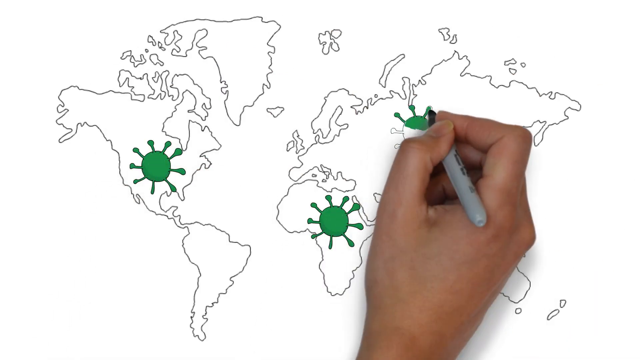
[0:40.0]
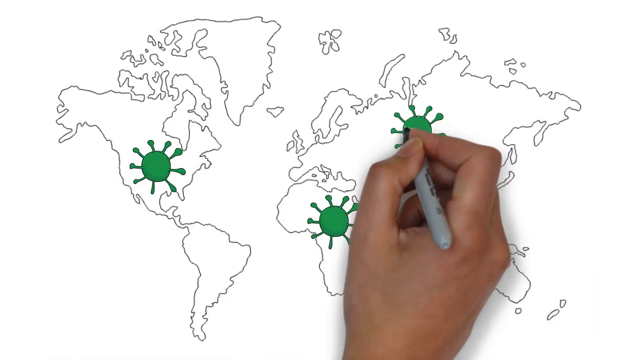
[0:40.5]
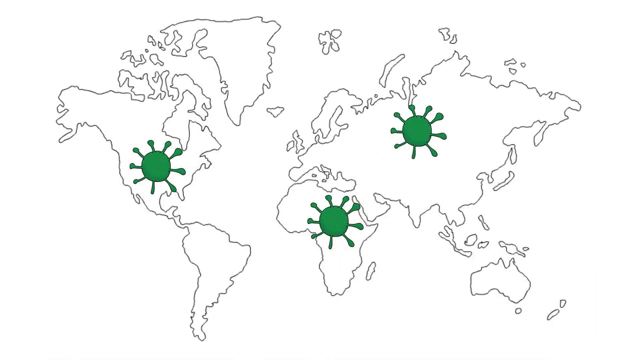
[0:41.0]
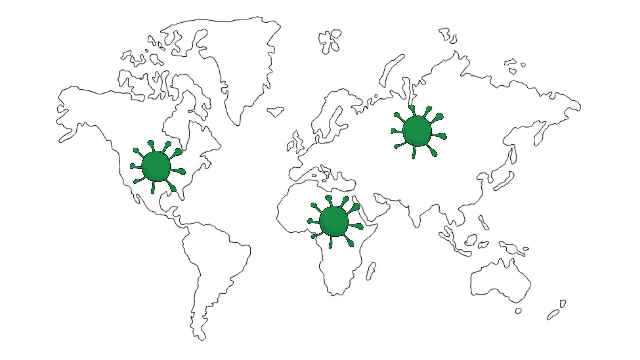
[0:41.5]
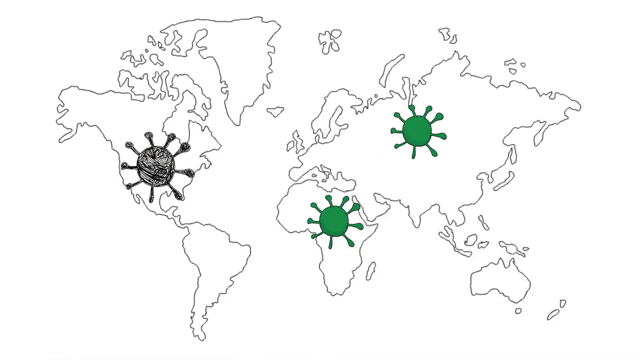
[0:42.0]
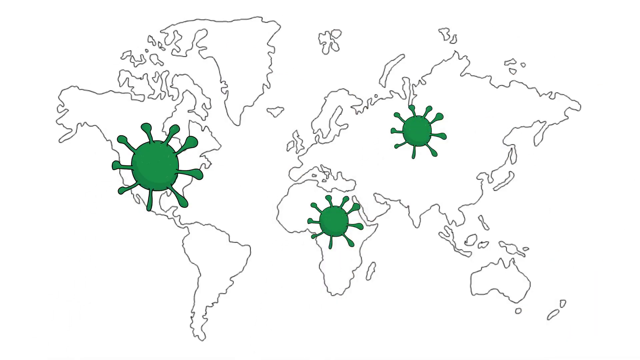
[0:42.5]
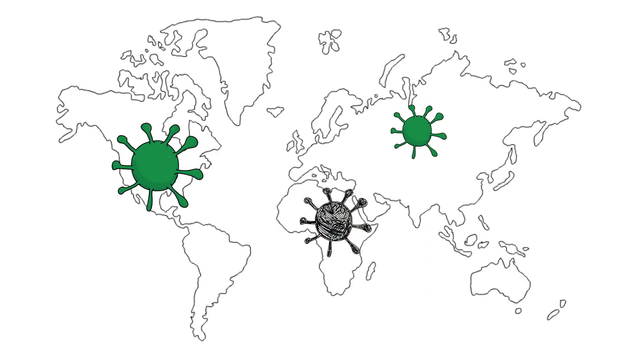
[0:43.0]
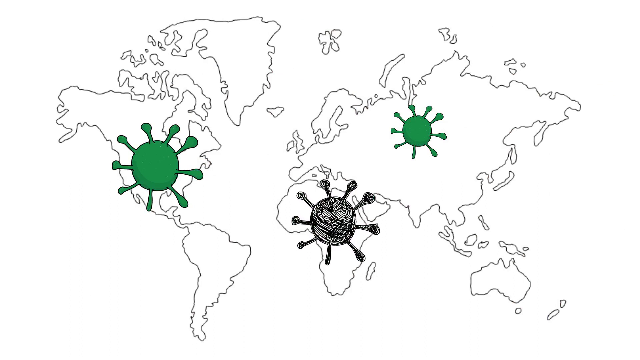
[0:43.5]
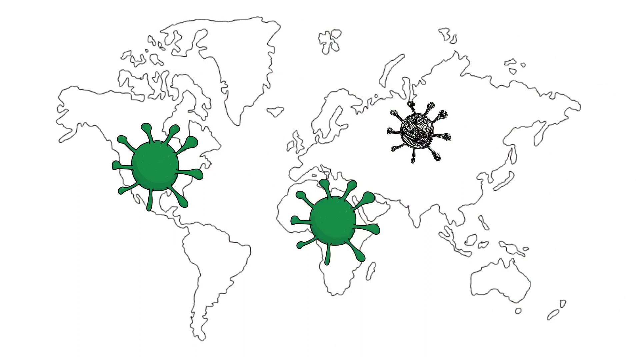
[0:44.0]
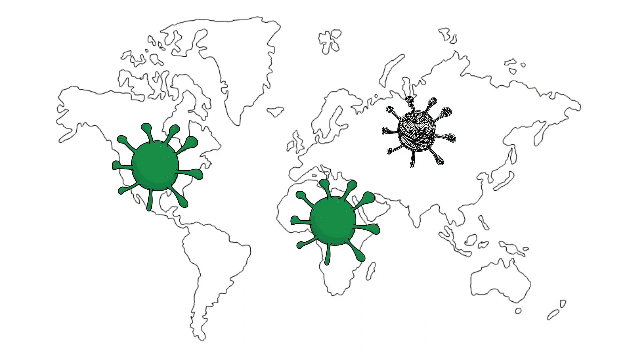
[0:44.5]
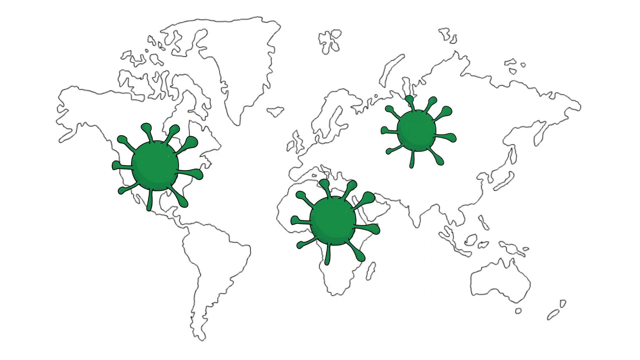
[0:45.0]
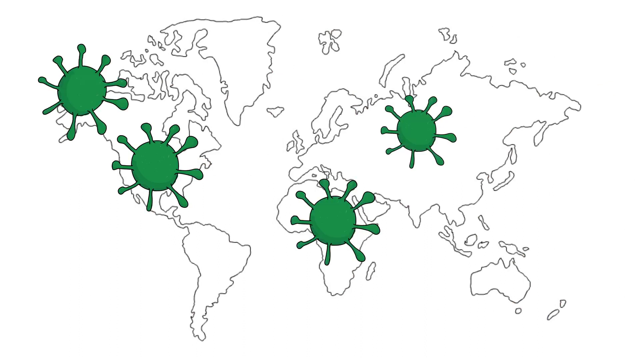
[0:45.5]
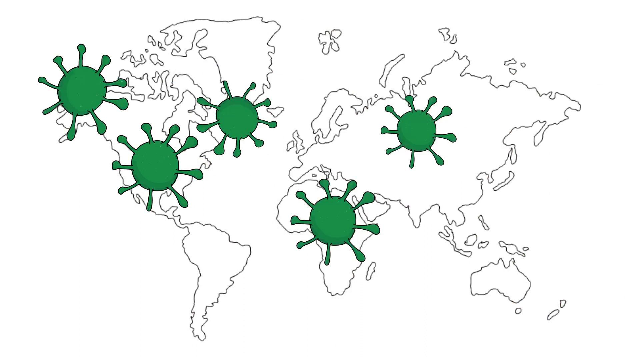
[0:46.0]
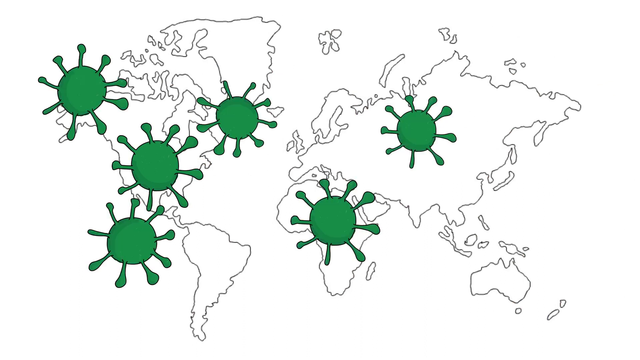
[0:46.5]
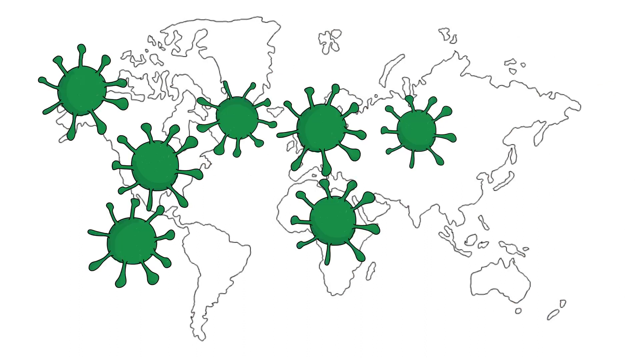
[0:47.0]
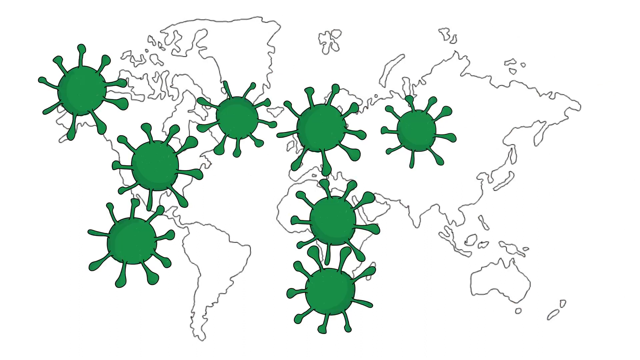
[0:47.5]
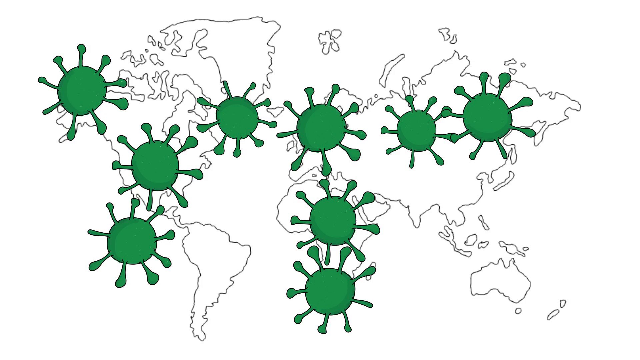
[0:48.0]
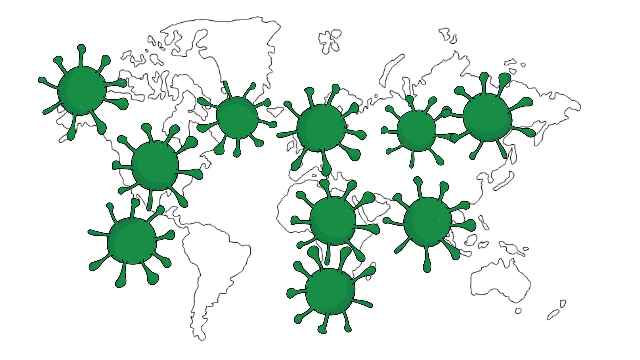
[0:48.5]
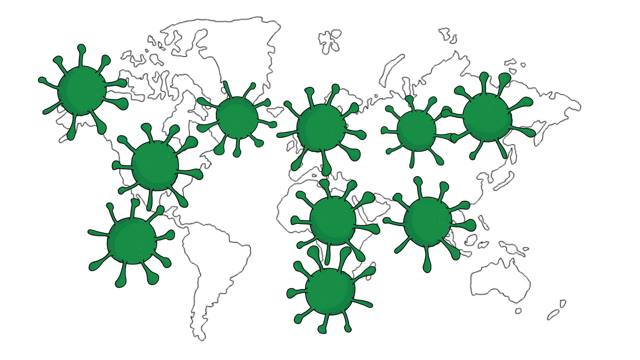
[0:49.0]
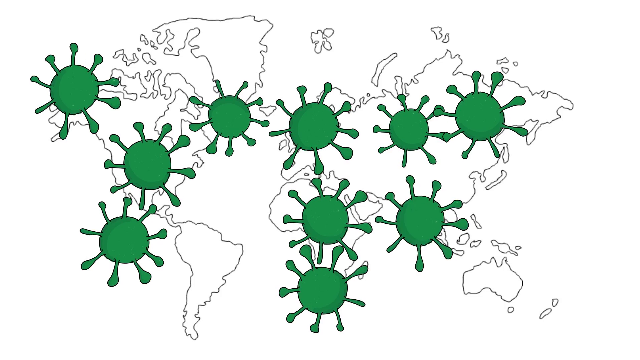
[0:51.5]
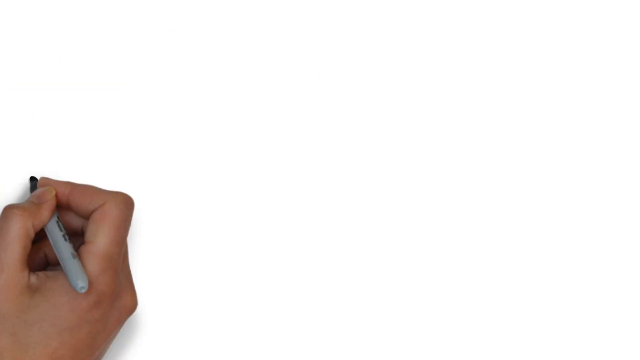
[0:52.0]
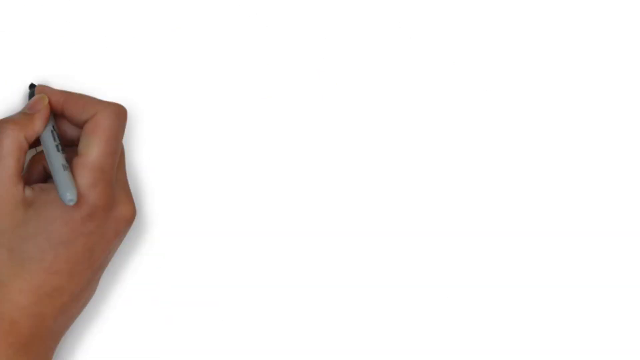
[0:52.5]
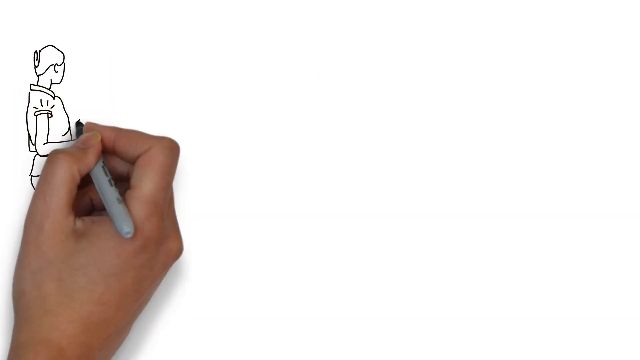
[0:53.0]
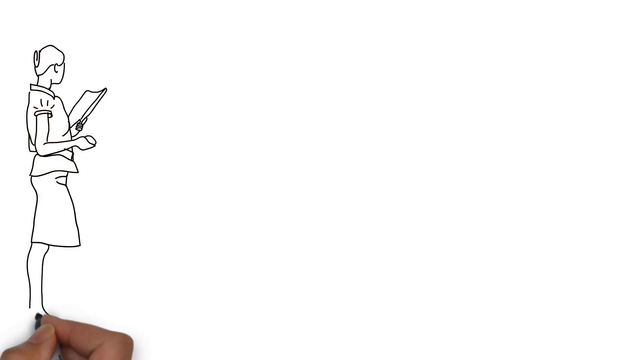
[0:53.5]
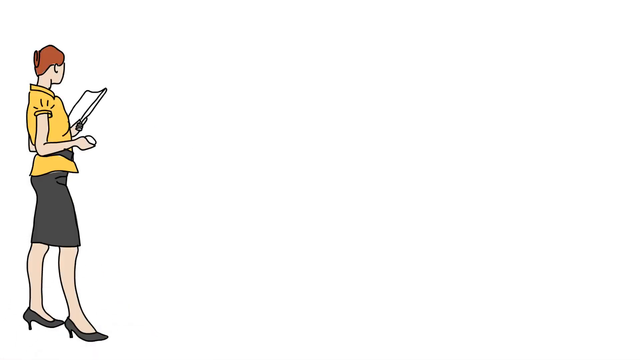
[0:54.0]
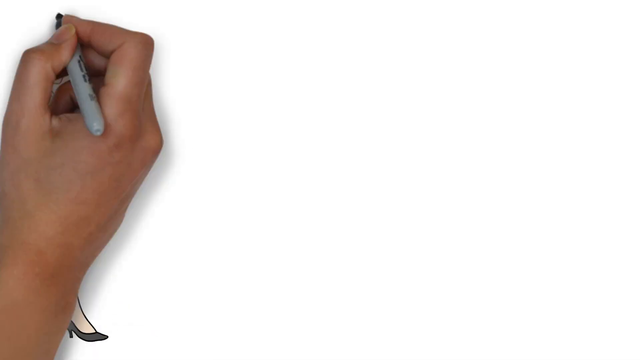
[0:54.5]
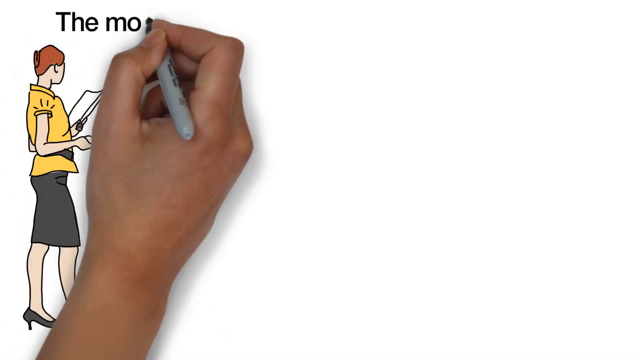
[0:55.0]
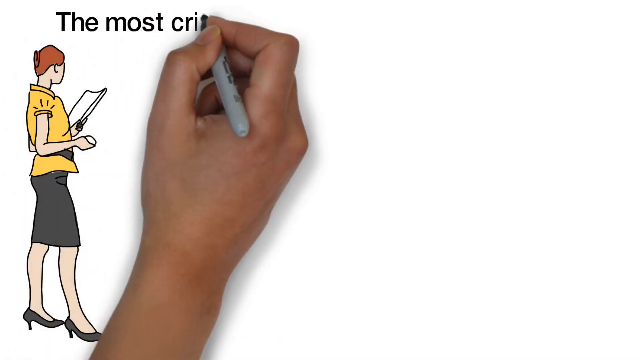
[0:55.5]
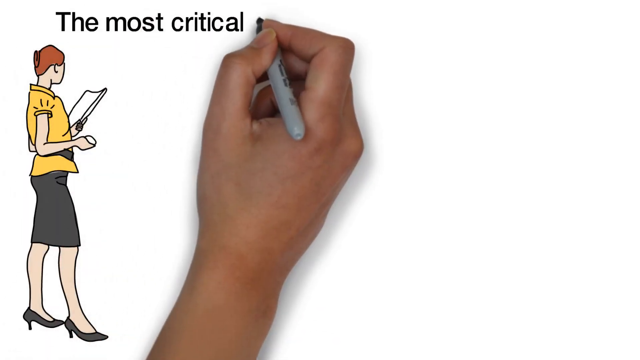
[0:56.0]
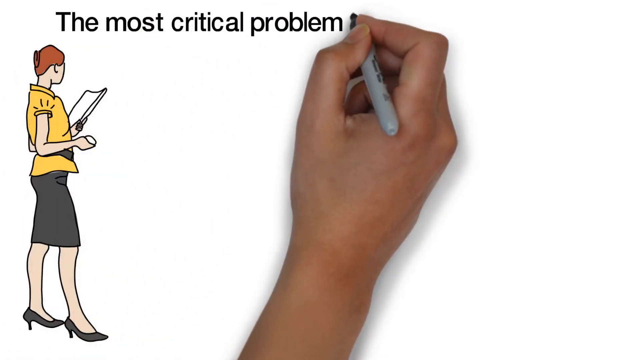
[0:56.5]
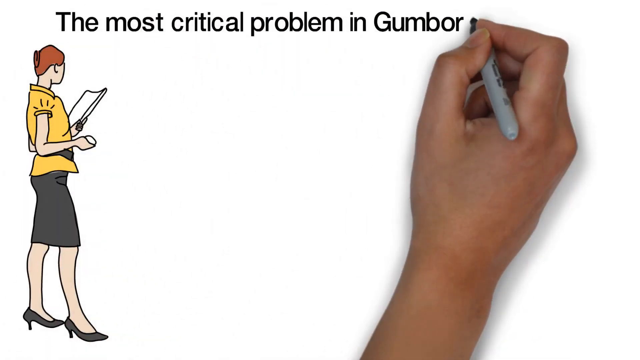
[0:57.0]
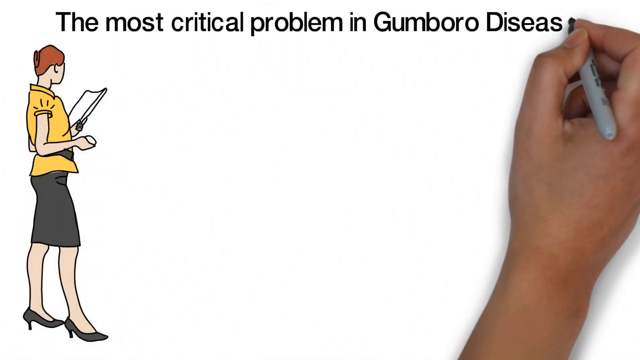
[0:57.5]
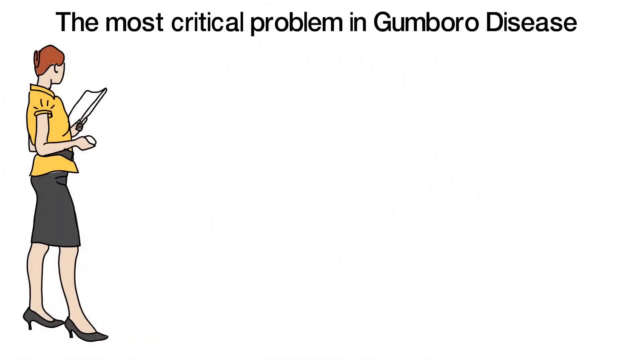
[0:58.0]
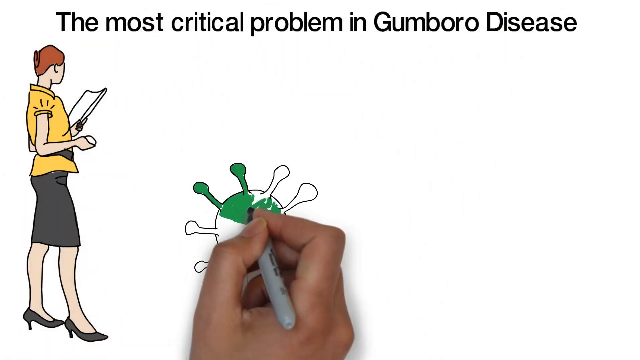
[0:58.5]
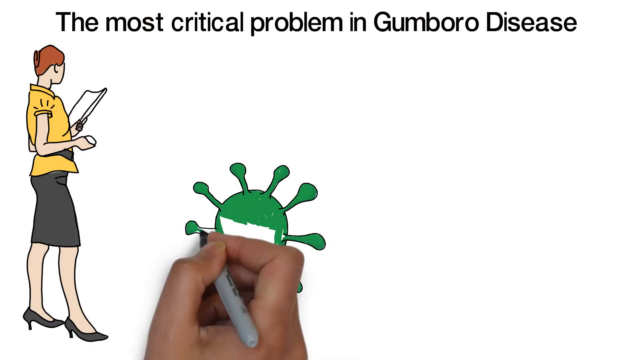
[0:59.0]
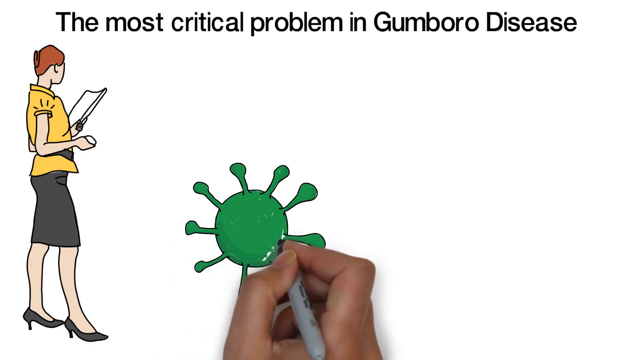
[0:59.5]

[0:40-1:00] The hand continues drawing green viruses on the different continents of the atlas with a sharpie marker. Three of the viruses across the continents enlarge until they are very large. The image fades to black and they become large green blobs of viruses with 9 spikes protruding from their globular bodies, which duplicate and triple across all the continents. Next, the hand draws a cartoon woman with auburn hair pinned up, wearing a yellow blouse, a knee-length black skirt and black pumps, holding a paper; at the top of the screen are the words "the most critical problem in gumboro disease". The hand continues to draw the large form of the green virus, which has eight spikes protruding from its central globular body, until the end of the slide.